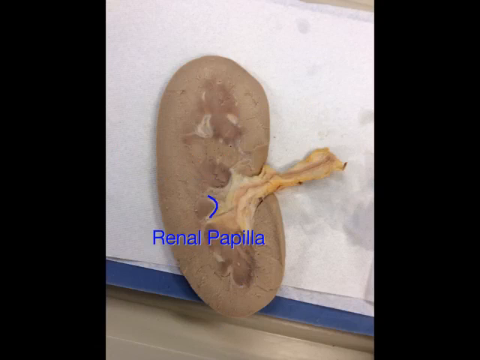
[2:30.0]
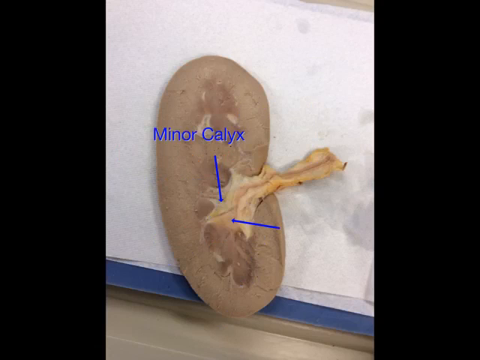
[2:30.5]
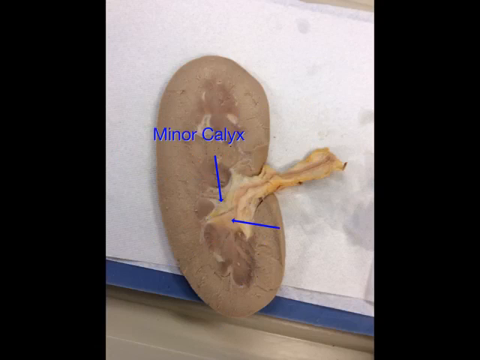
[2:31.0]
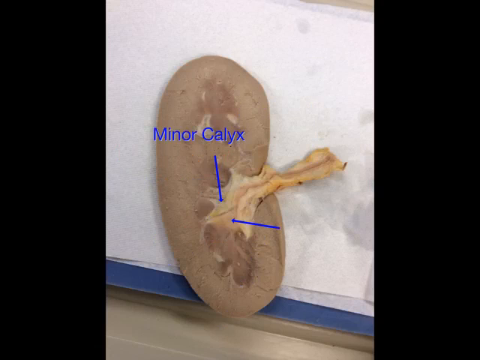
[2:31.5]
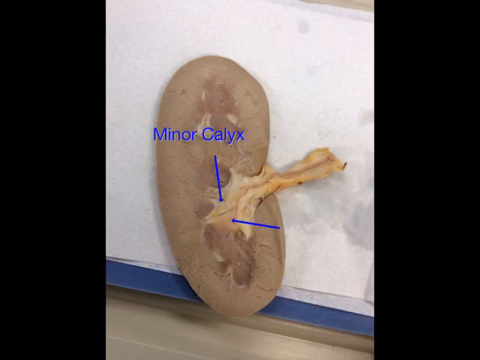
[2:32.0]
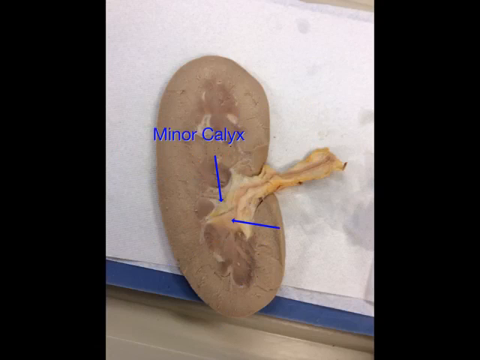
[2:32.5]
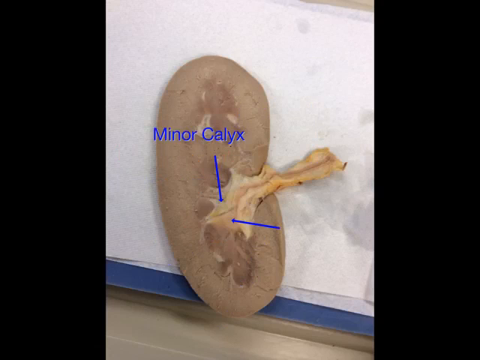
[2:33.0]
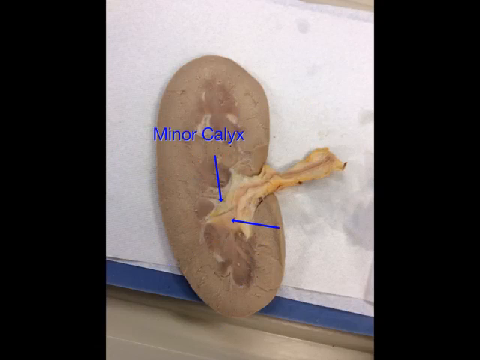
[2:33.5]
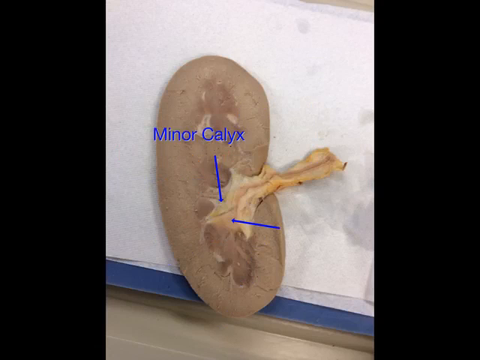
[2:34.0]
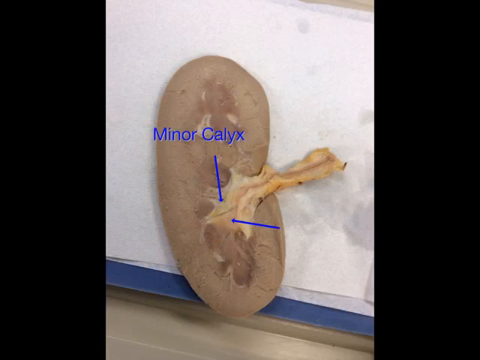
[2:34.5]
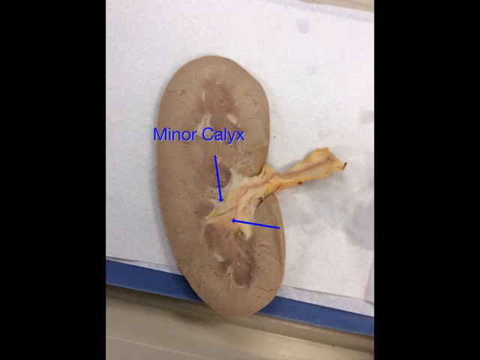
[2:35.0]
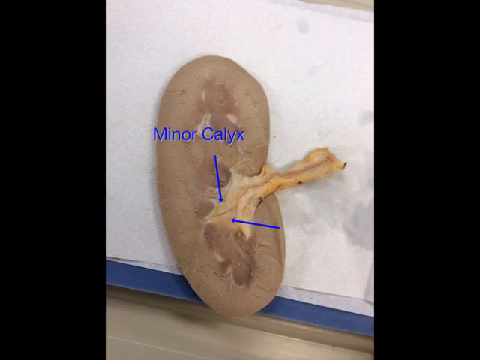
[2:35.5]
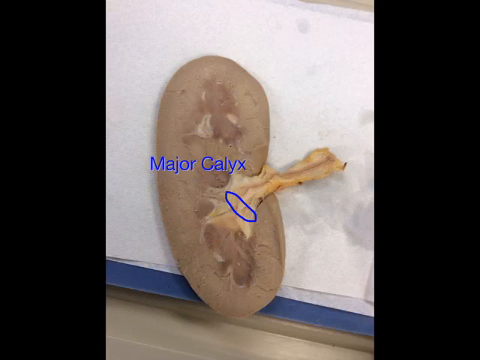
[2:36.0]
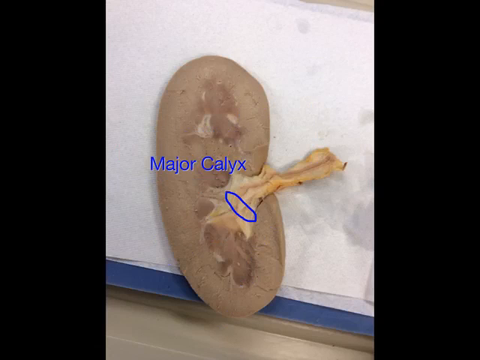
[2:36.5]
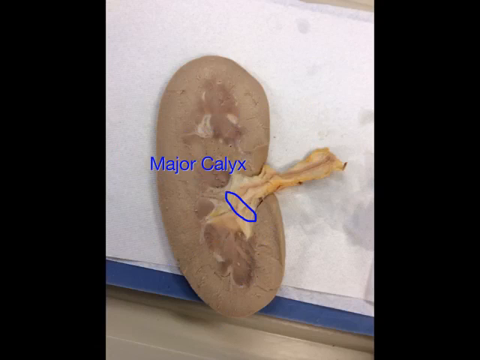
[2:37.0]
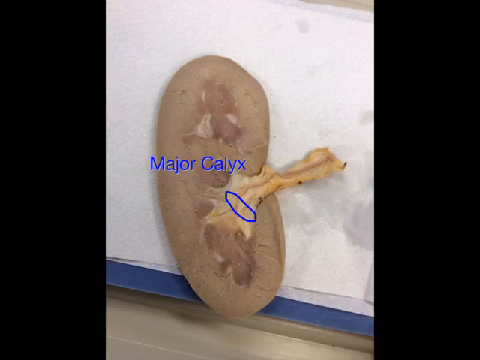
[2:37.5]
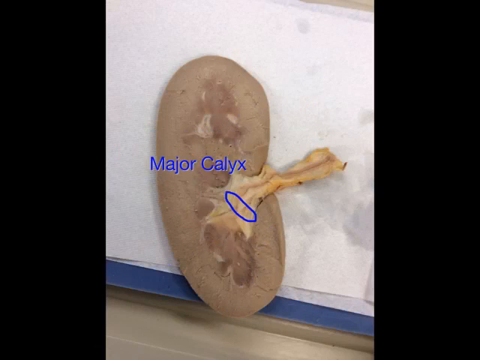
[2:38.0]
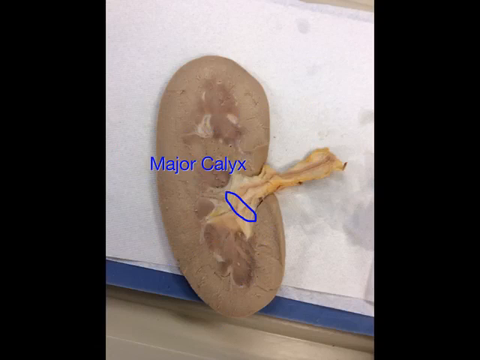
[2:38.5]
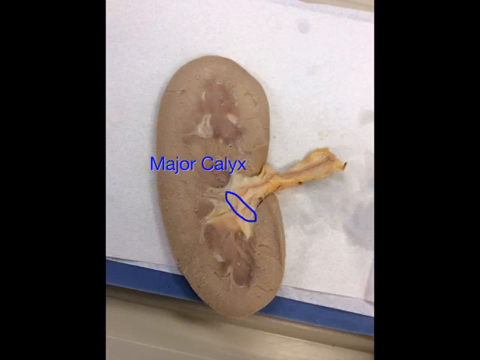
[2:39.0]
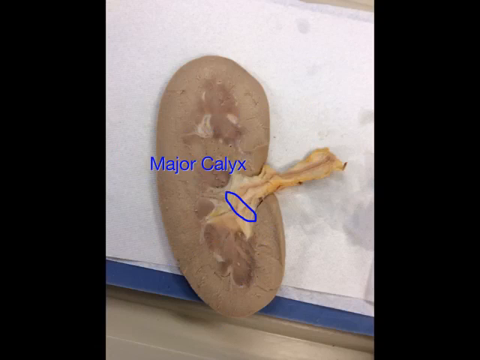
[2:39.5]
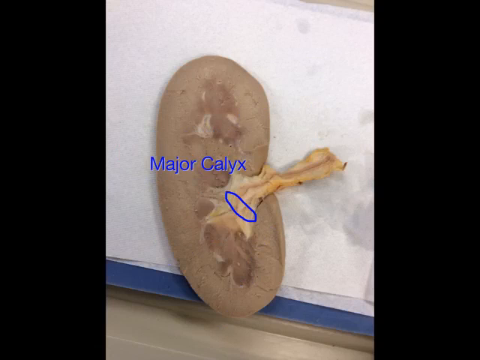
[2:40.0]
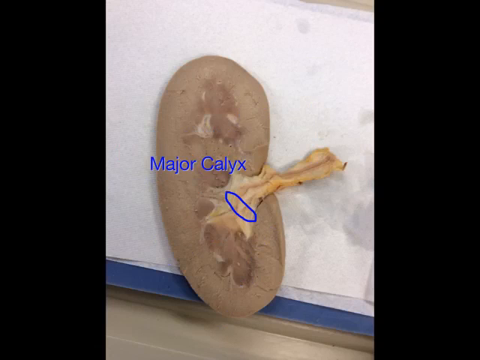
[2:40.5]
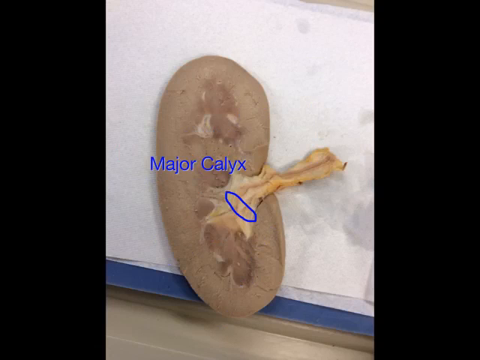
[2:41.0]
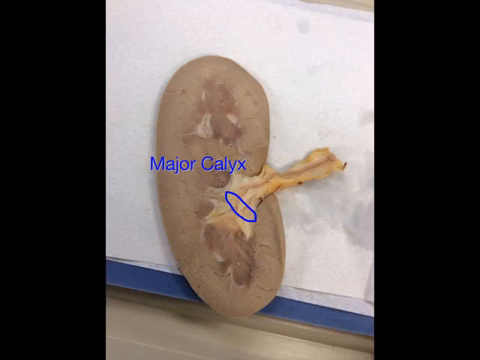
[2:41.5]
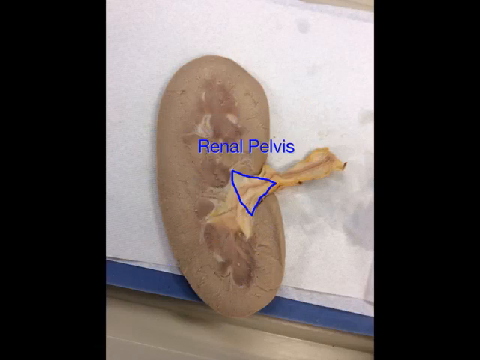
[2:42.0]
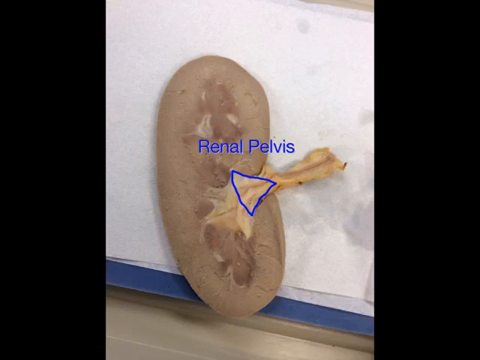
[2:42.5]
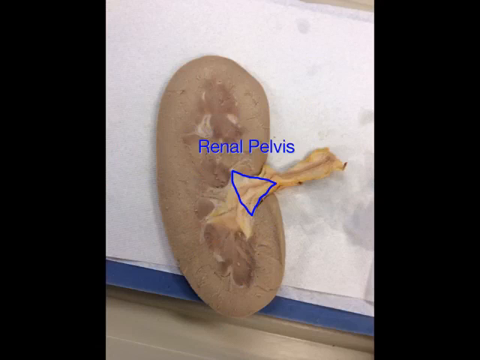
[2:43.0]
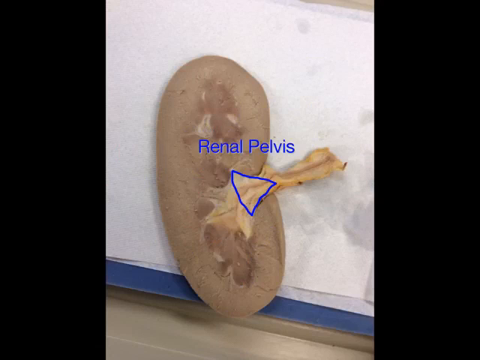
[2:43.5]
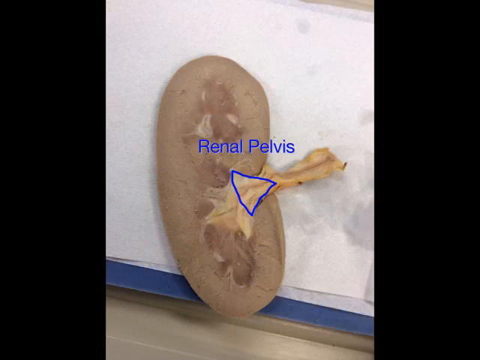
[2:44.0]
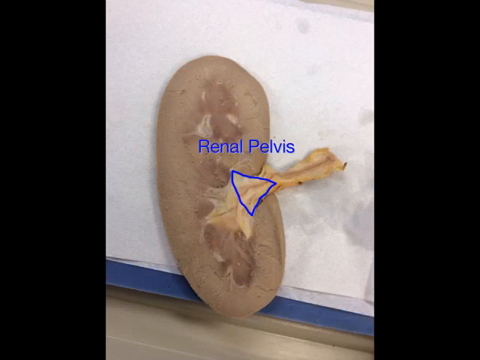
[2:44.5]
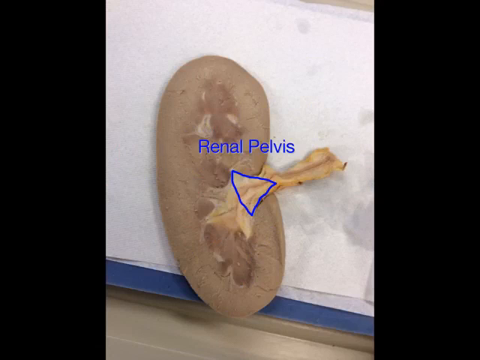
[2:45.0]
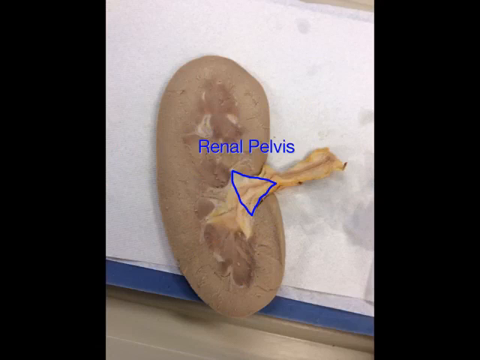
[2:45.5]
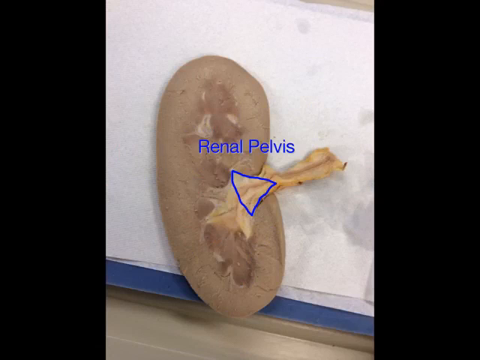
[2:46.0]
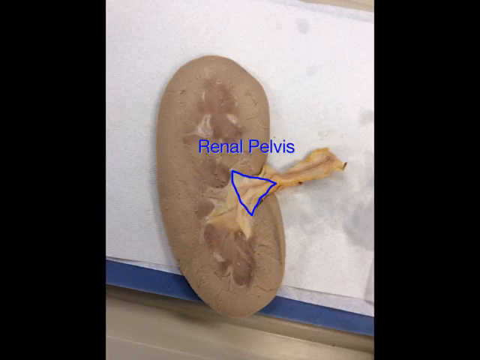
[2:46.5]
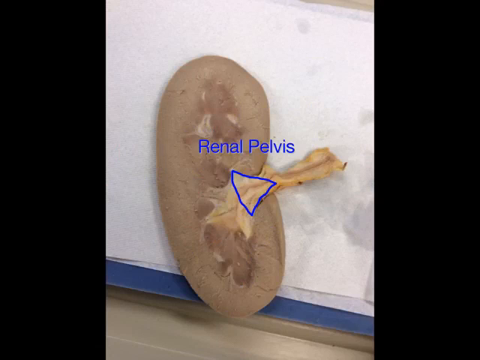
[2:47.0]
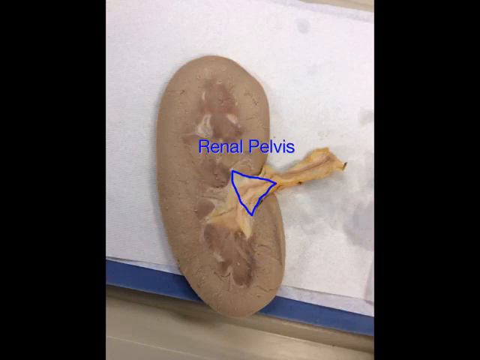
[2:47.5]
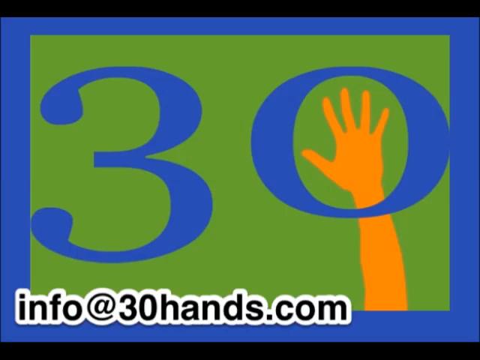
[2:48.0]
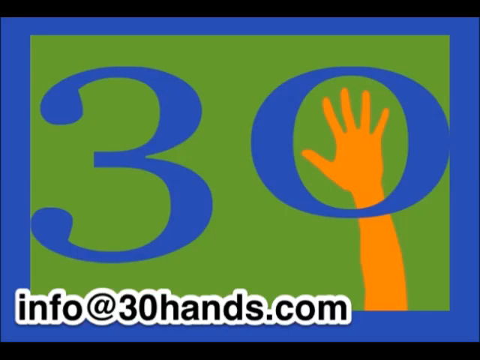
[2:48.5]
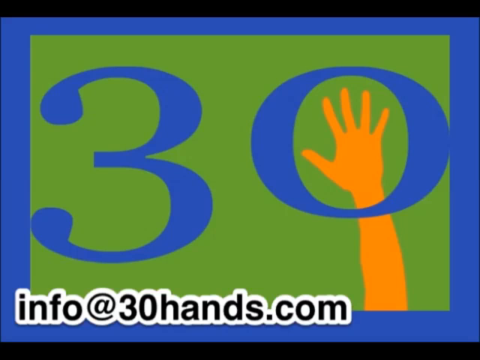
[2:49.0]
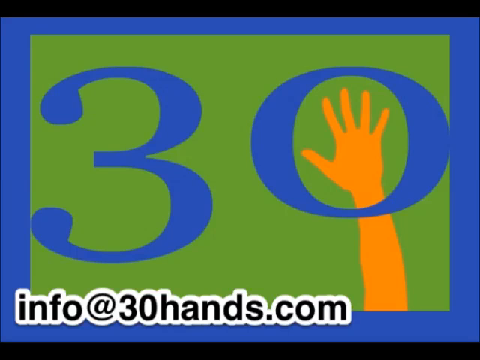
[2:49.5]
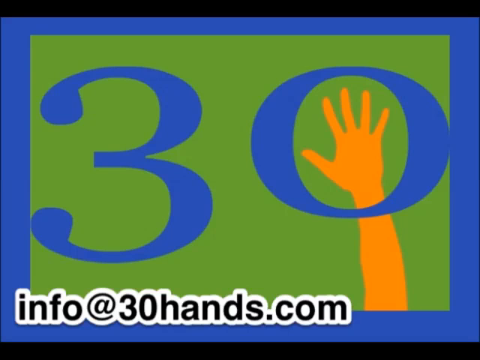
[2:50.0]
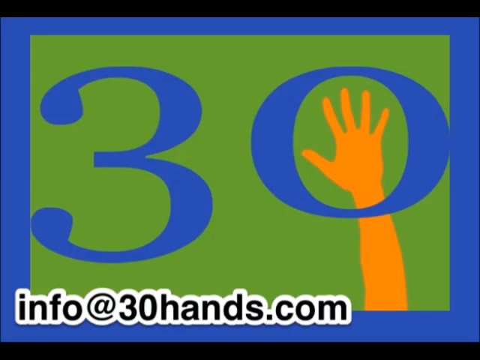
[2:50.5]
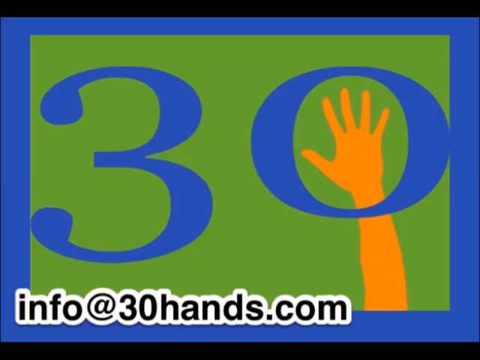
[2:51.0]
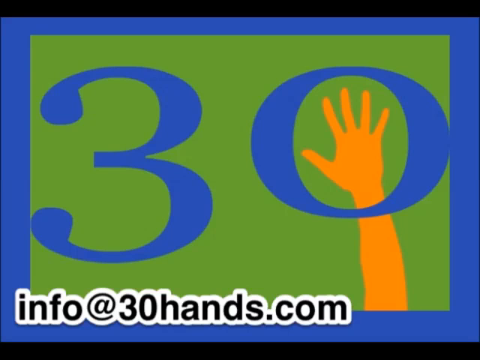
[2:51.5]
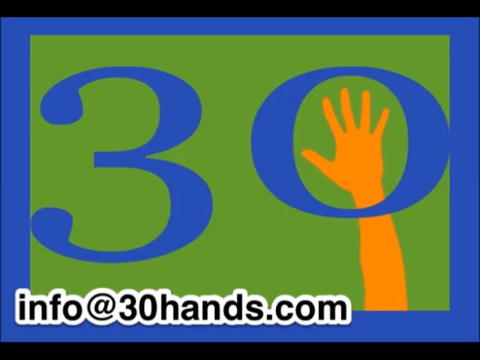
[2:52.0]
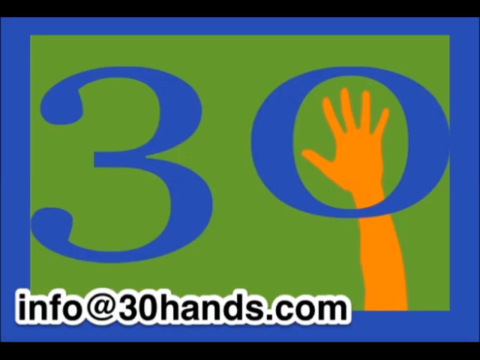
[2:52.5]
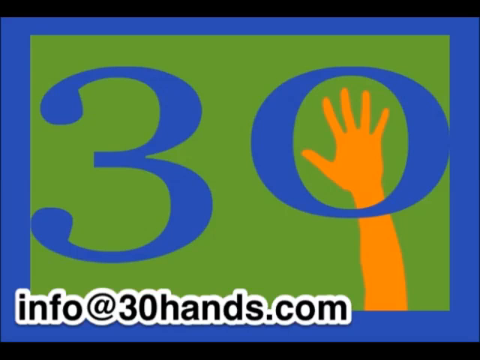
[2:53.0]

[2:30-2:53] The renal papilla on the inside of the kidney, which has been cut in half, is shown. Next, two arrows point to the minor calyx area. The major calyx is circled, in almost the center of the kidney. Then the renal pelvis is shown, the area where a lighter tan mass comes out to the right side of the kidney. After that, a logo with the number 30 appears in the center of the screen, with a drawing of a hand on the right side reaching up into the center of the zero of the 30. In the lower left of the screen, a website reads "info@30hands.com."